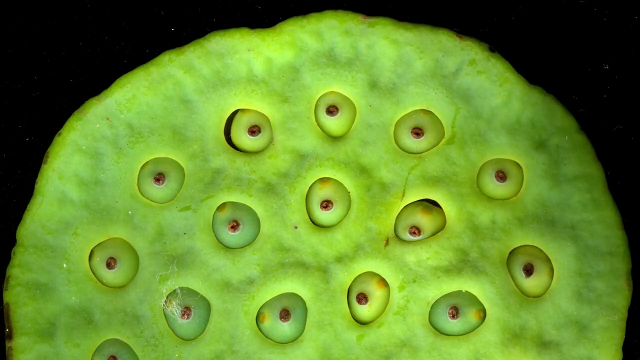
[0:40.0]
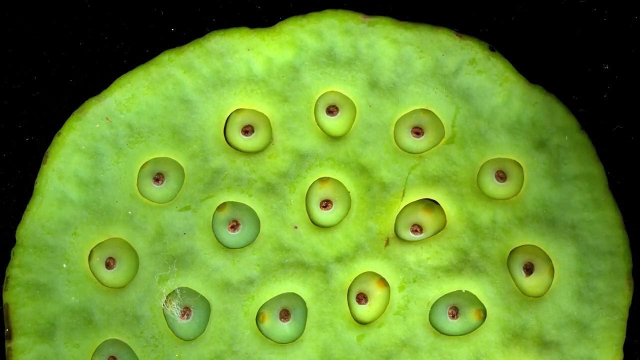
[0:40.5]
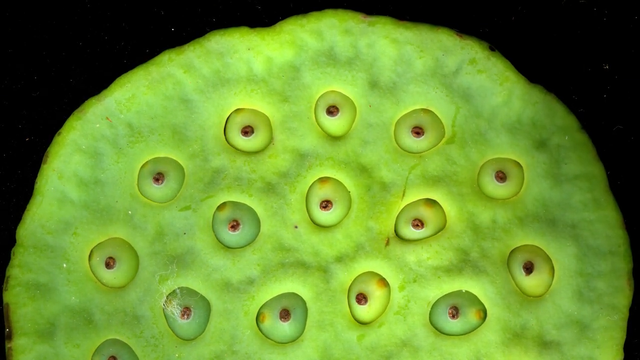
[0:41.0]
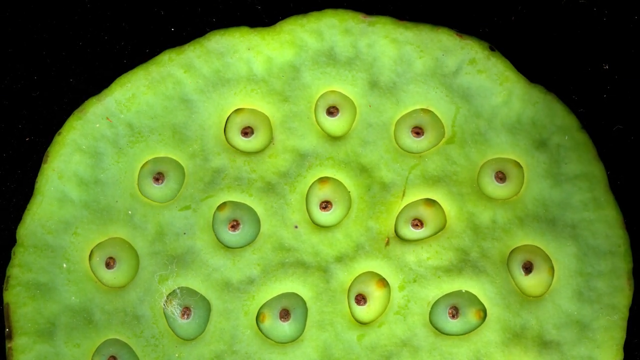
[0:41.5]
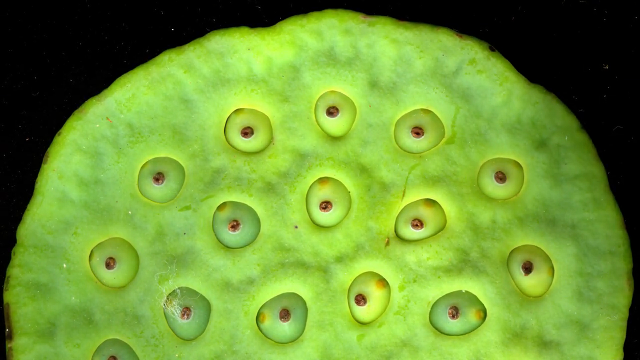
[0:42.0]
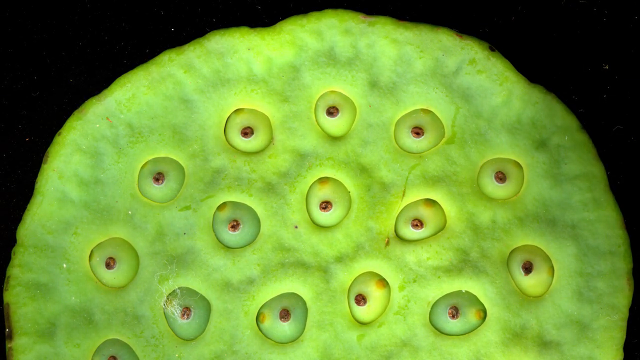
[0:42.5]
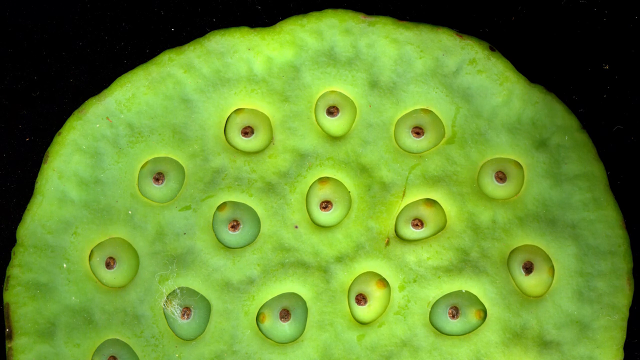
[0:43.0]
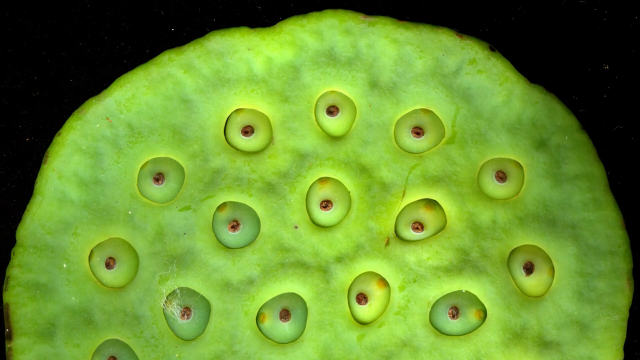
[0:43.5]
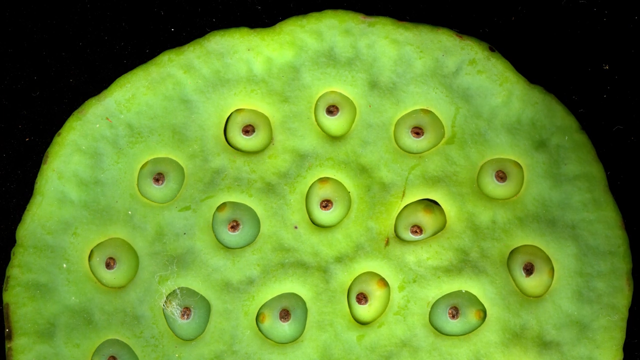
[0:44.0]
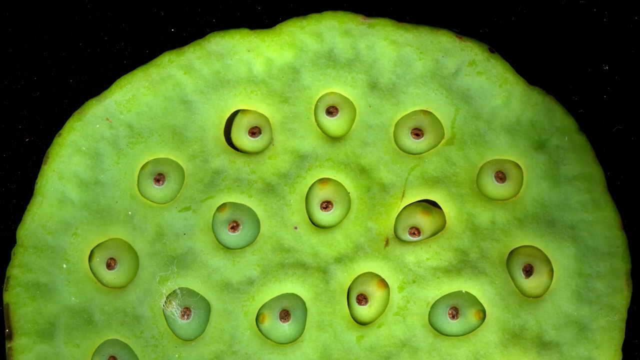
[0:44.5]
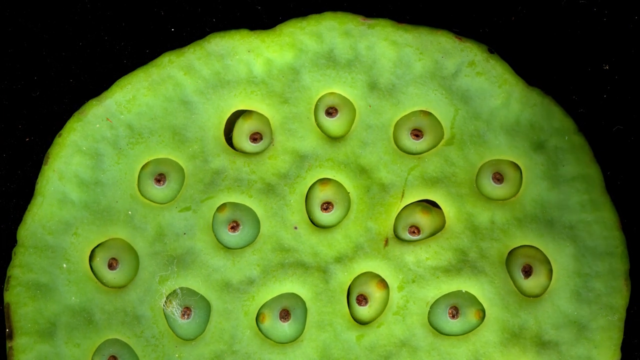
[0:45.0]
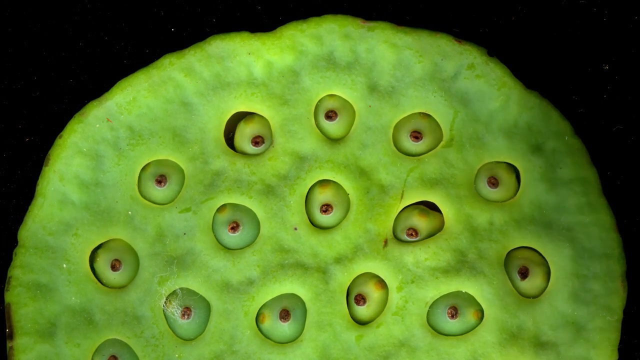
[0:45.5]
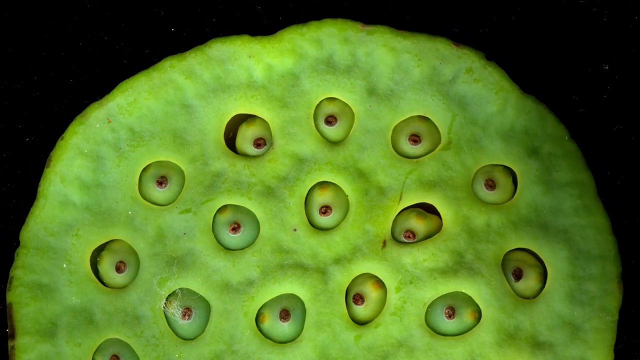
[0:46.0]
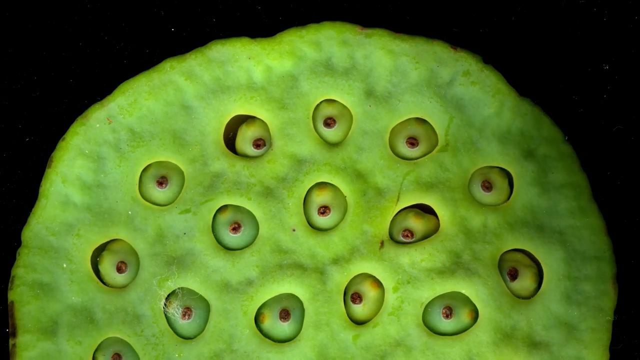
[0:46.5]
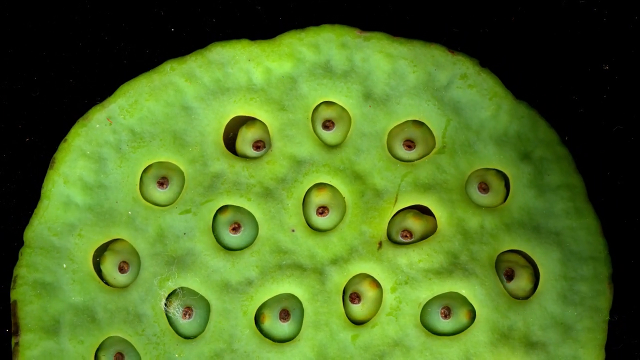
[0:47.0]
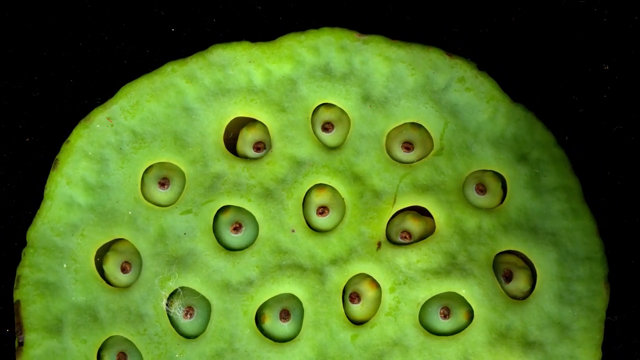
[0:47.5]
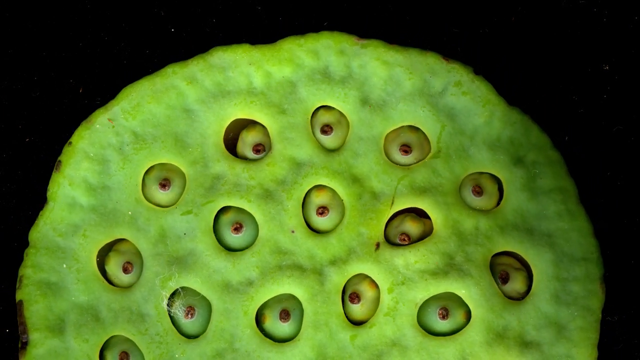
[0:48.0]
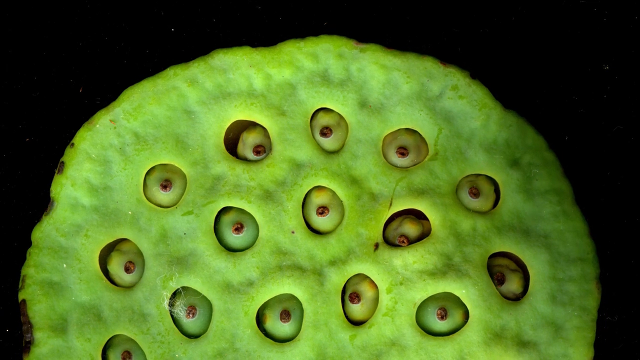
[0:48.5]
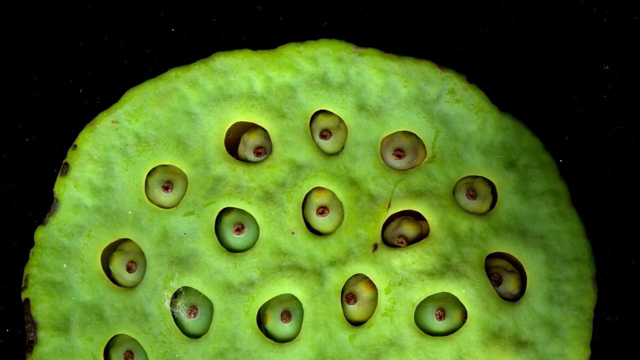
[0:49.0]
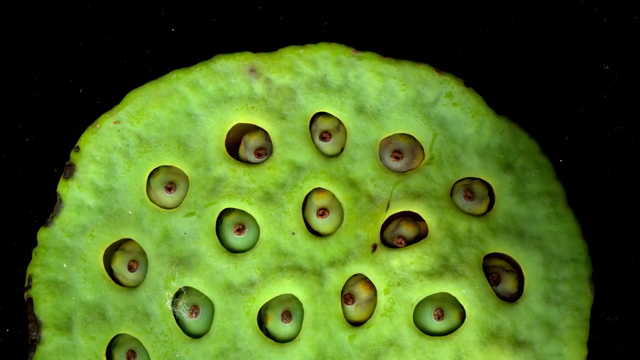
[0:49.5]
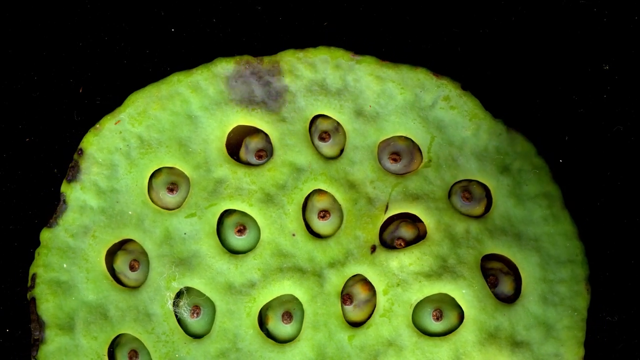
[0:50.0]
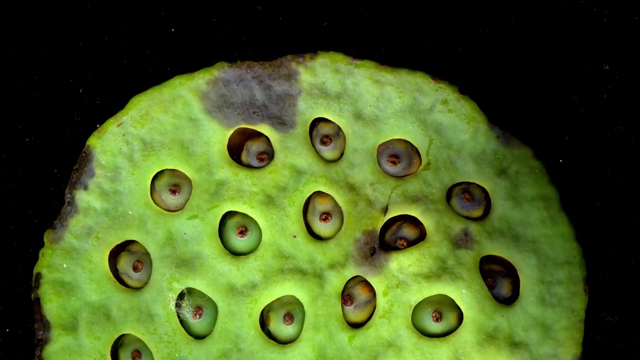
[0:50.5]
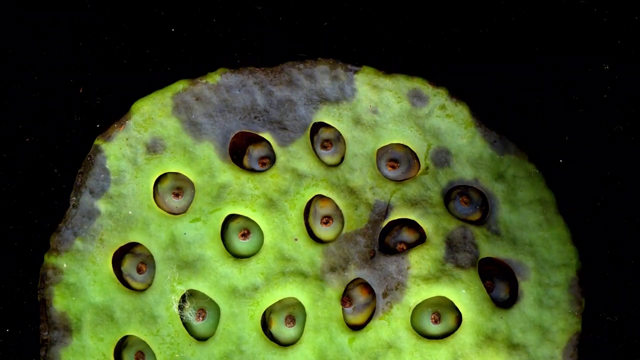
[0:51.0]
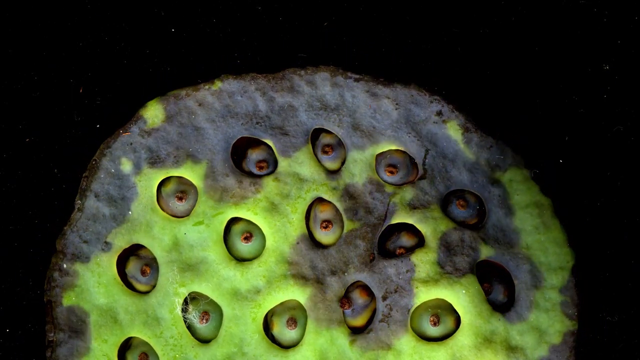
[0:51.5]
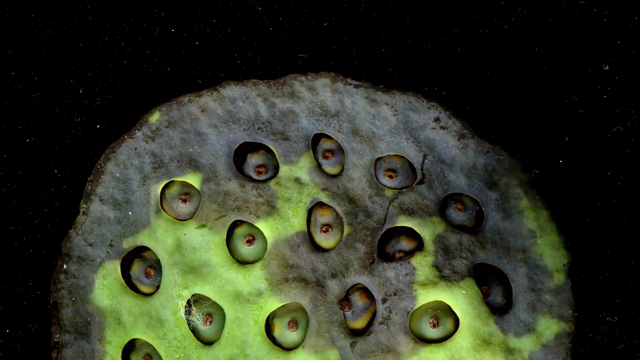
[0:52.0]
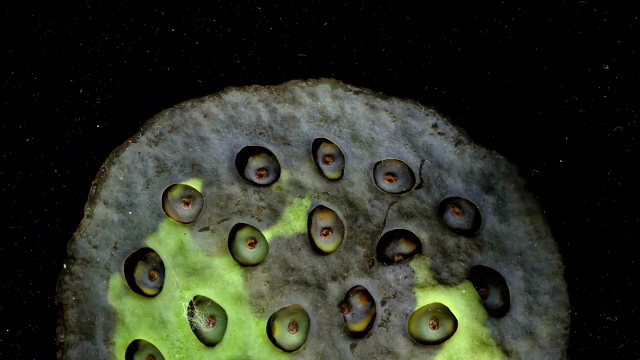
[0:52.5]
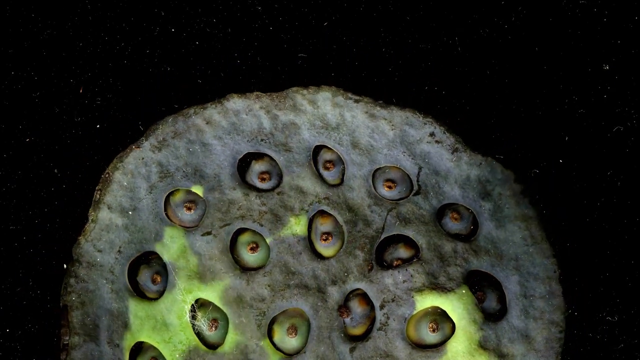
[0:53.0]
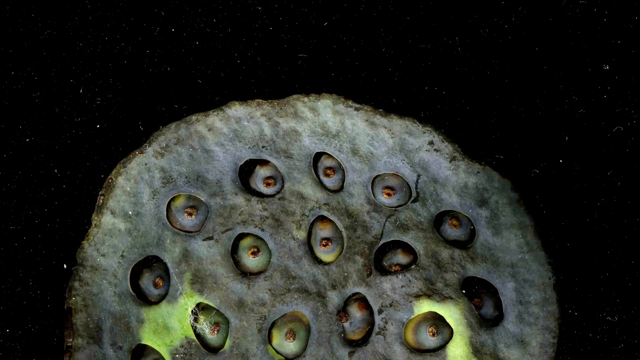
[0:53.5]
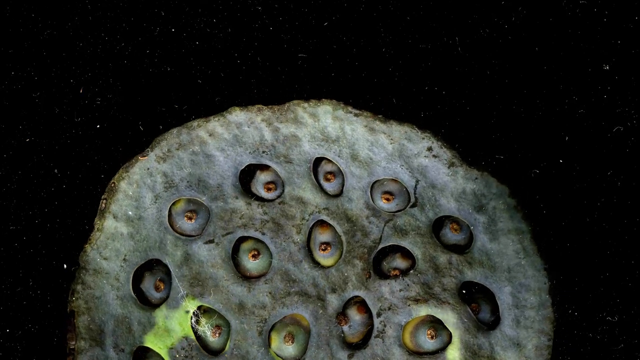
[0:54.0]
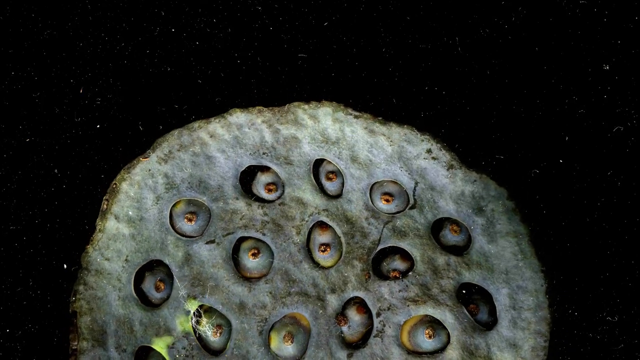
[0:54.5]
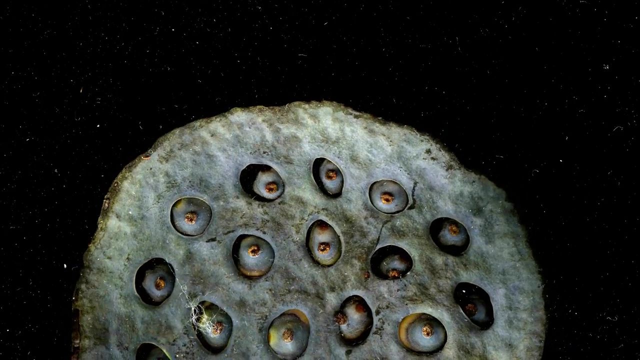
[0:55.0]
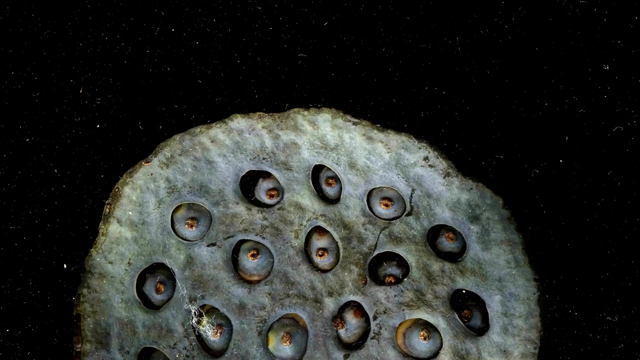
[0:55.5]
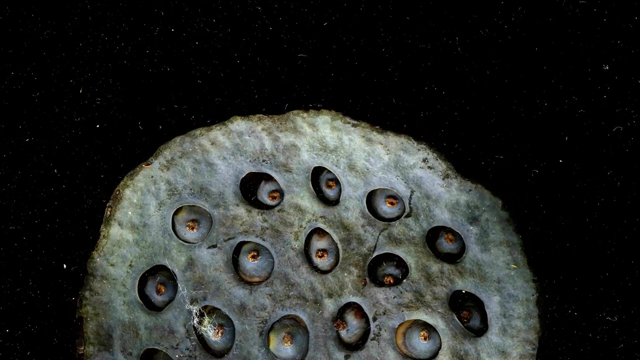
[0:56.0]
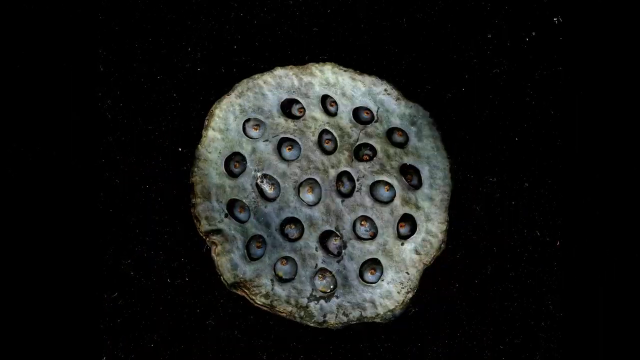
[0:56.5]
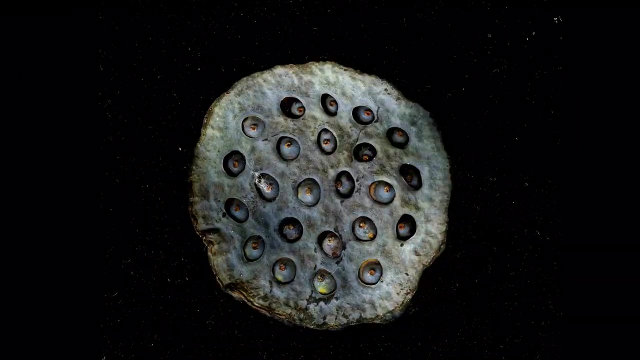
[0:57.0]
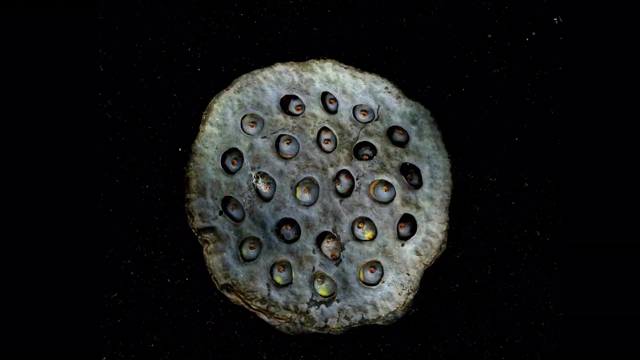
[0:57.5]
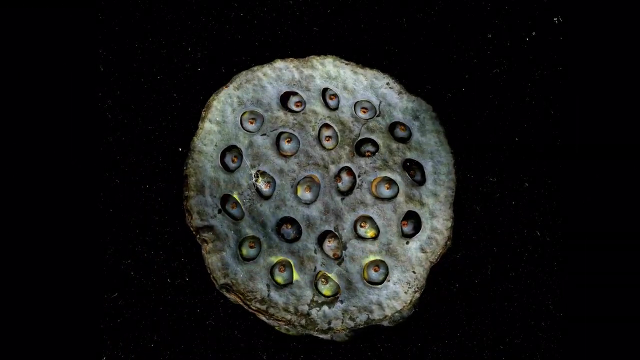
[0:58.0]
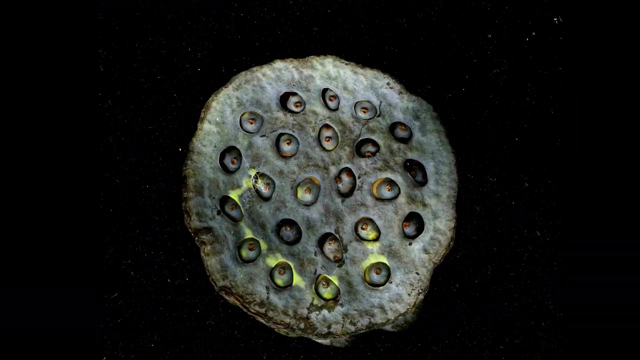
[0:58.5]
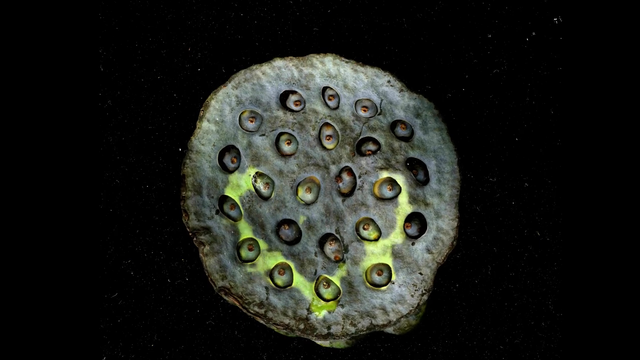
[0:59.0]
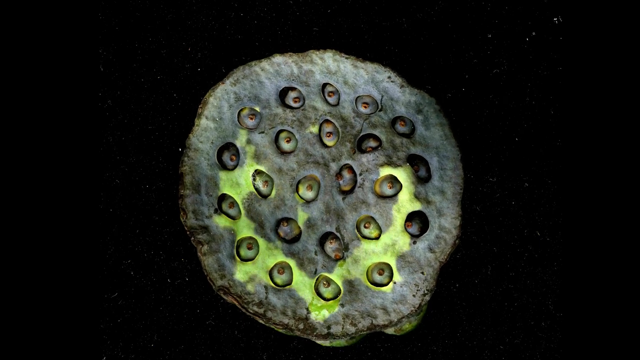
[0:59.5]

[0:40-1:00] The shot begins with the fleshy, bright green plant, of an unidentified type, with the seed pods in holes within its skin or flesh. The plant becomes fleshy, then everything starts to sort of die away: it goes grey slowly and then very quickly, everything dries out, and the seed pods disappear. Half the plant goes black very quickly and becomes a bit cracked. A whole view then shows what appears to be a circle, looking almost as if it is in a night sky, though it is not. The full circle is visible with the seed pods in their holes, maybe a couple of dozen of them in the surface of the plant, and green starts to spread across the surface.